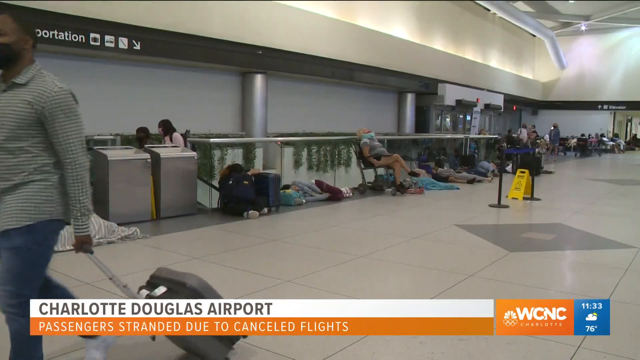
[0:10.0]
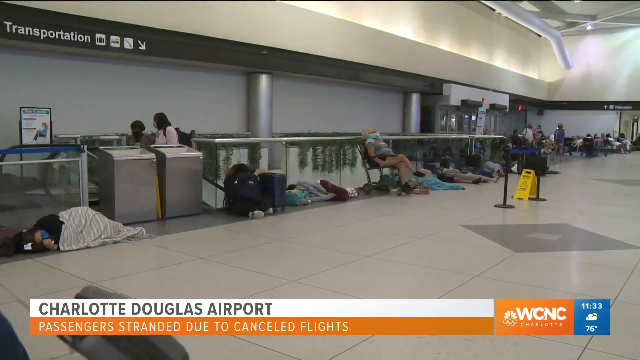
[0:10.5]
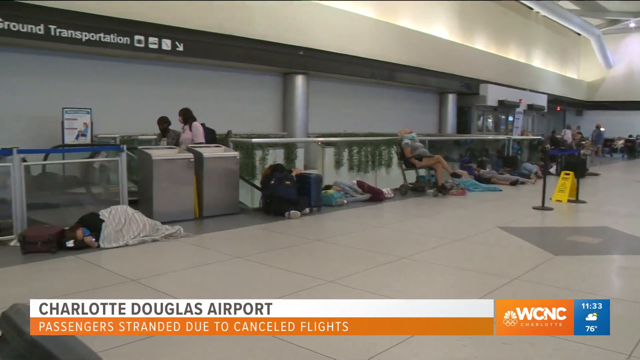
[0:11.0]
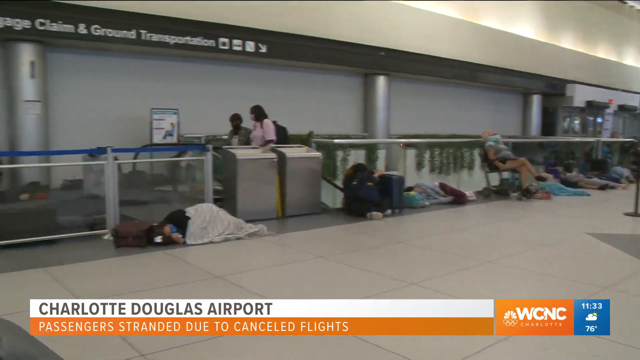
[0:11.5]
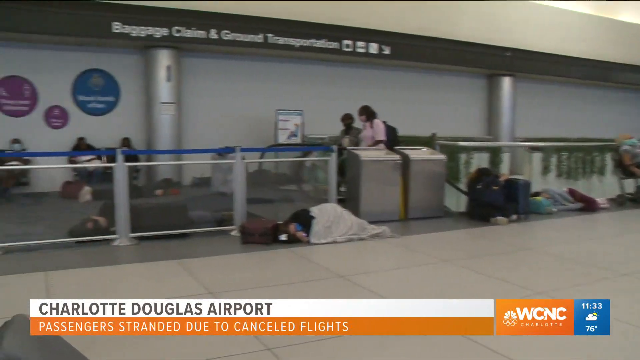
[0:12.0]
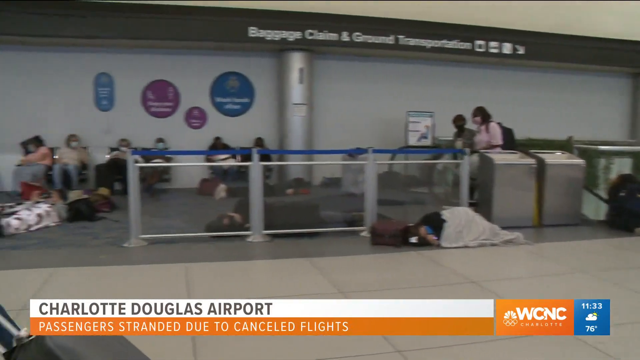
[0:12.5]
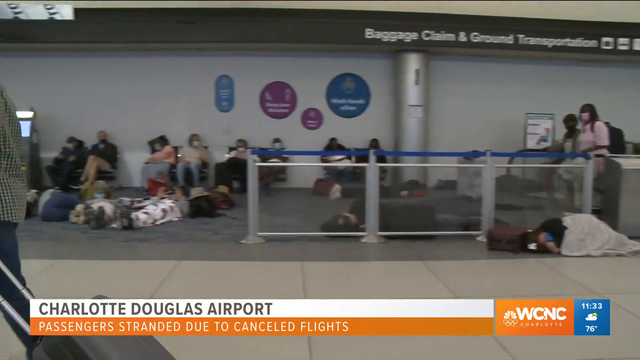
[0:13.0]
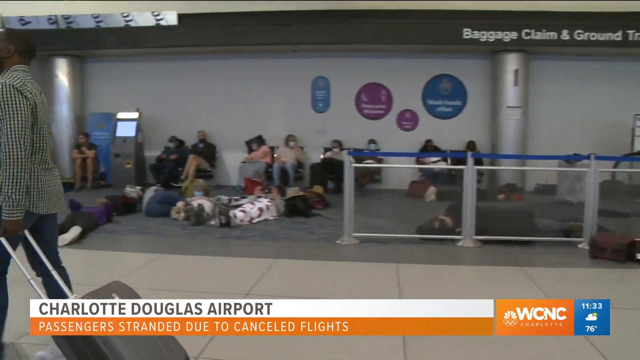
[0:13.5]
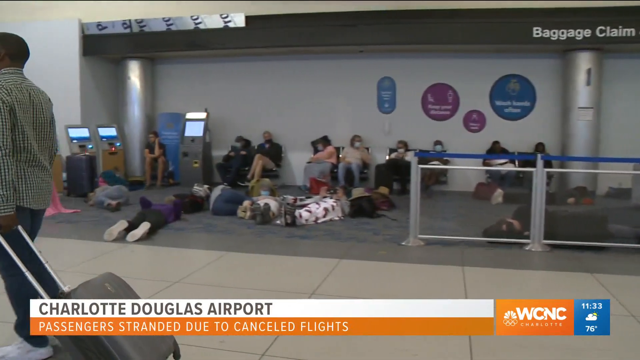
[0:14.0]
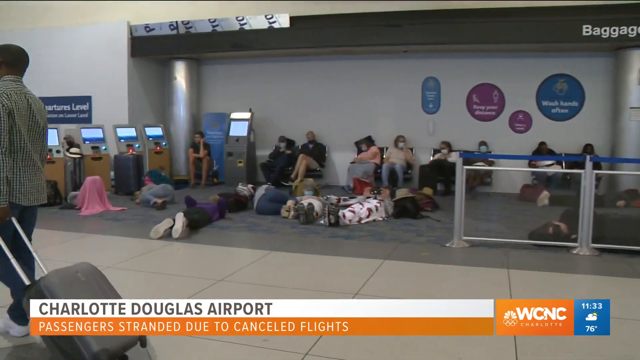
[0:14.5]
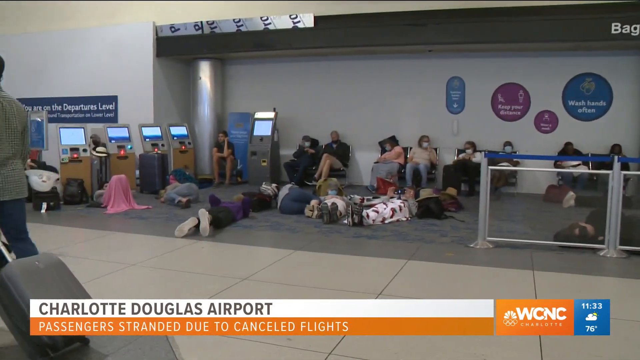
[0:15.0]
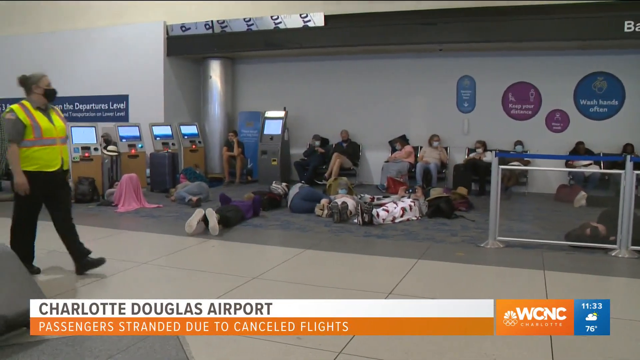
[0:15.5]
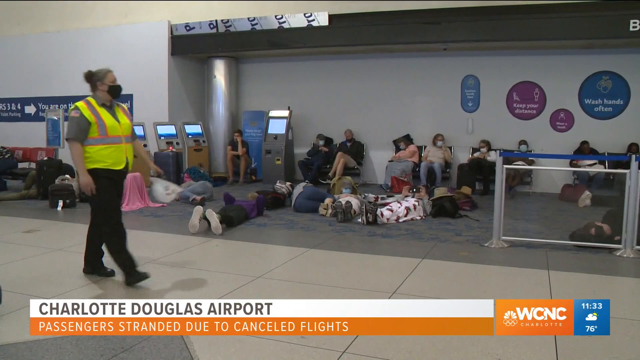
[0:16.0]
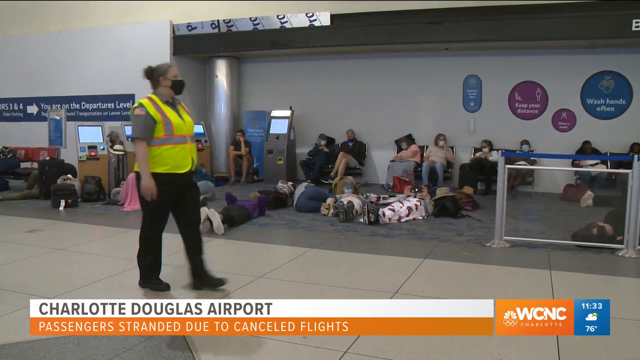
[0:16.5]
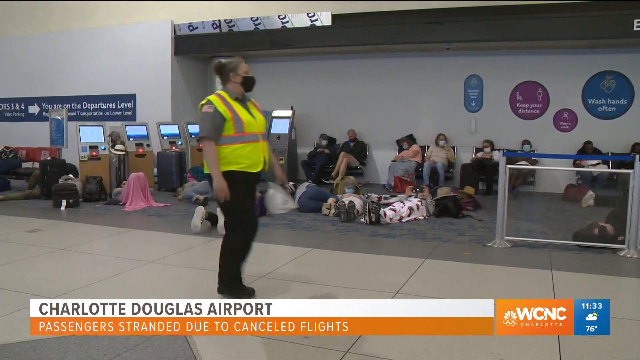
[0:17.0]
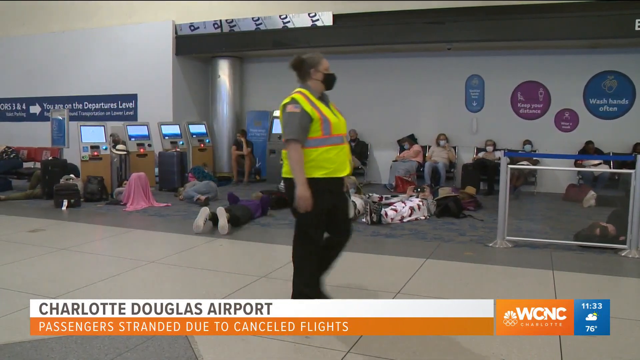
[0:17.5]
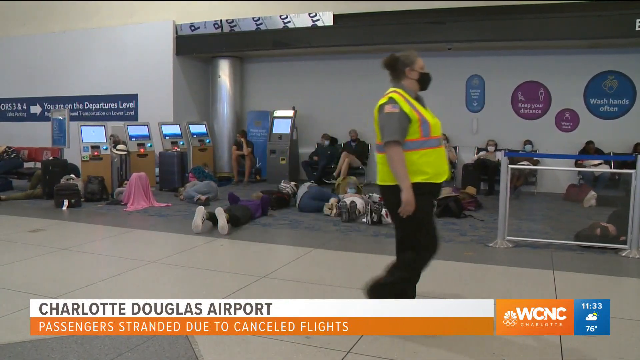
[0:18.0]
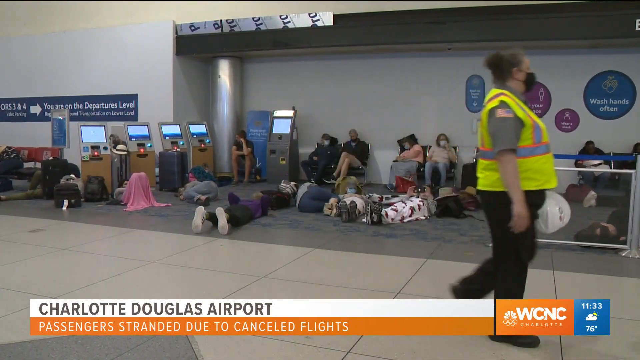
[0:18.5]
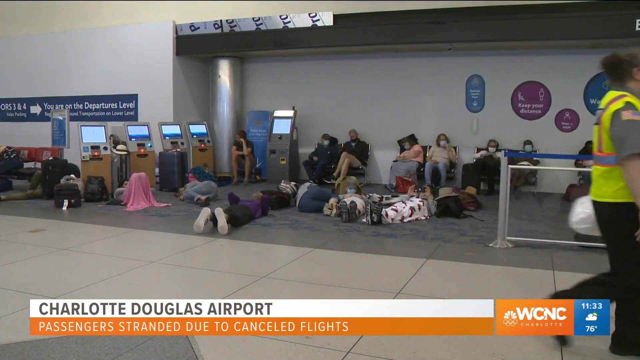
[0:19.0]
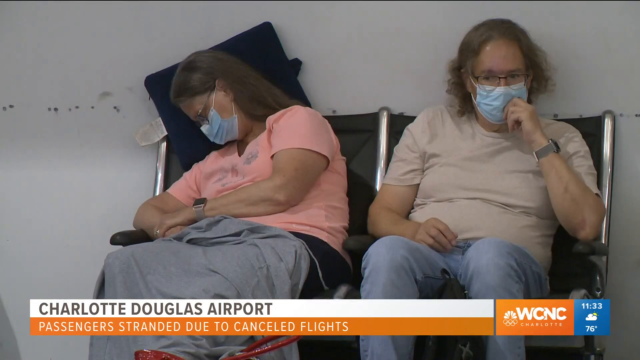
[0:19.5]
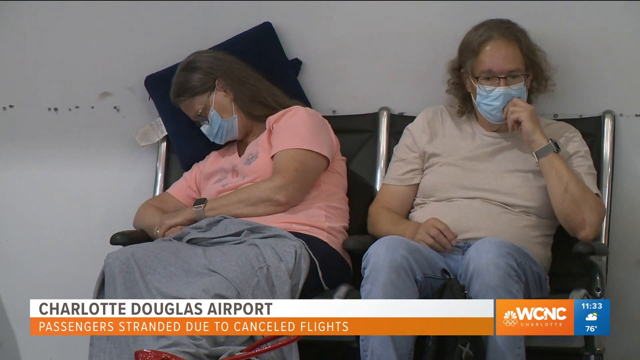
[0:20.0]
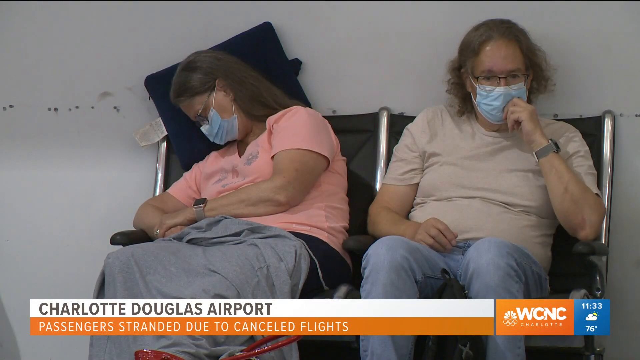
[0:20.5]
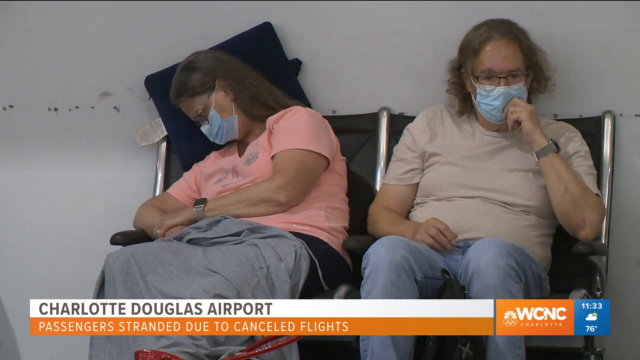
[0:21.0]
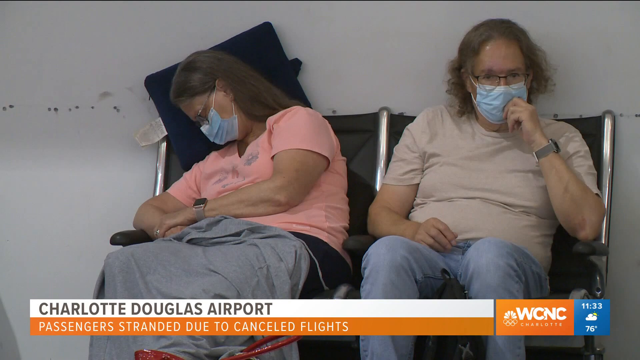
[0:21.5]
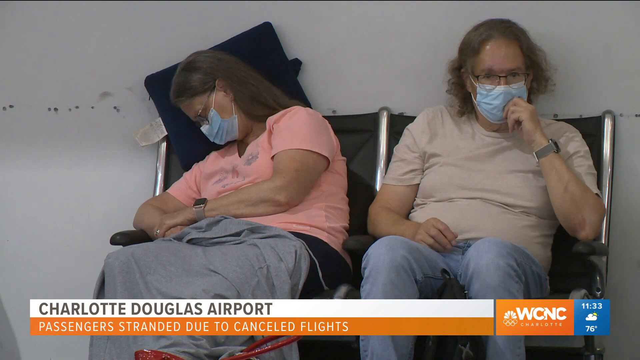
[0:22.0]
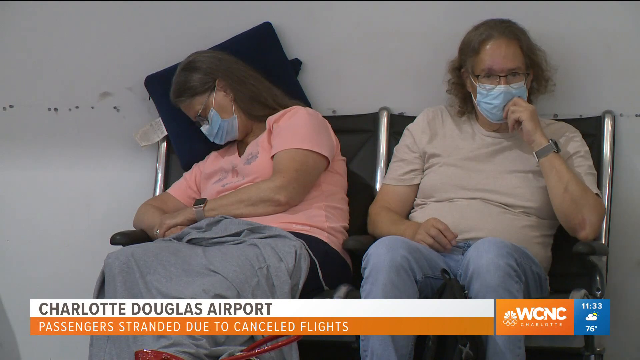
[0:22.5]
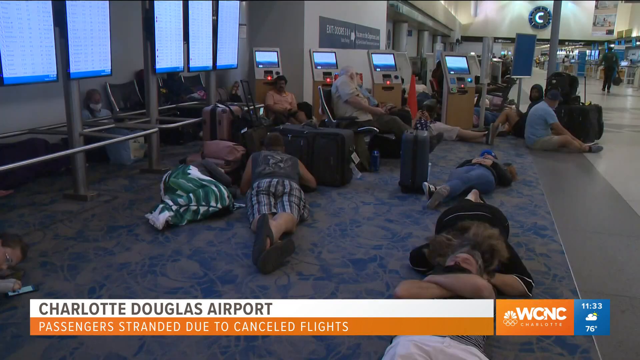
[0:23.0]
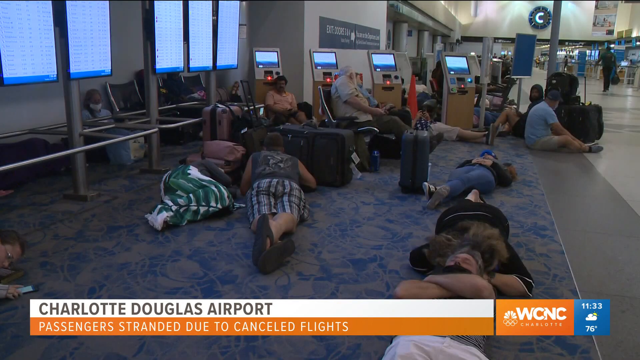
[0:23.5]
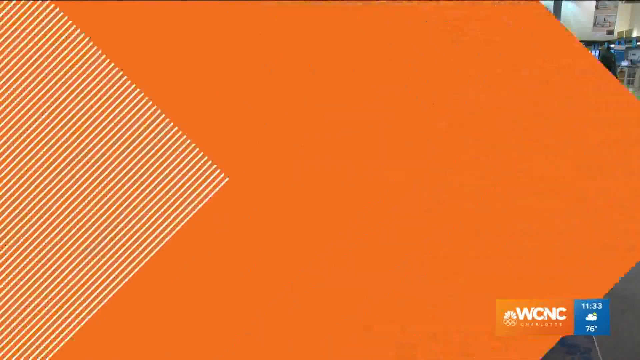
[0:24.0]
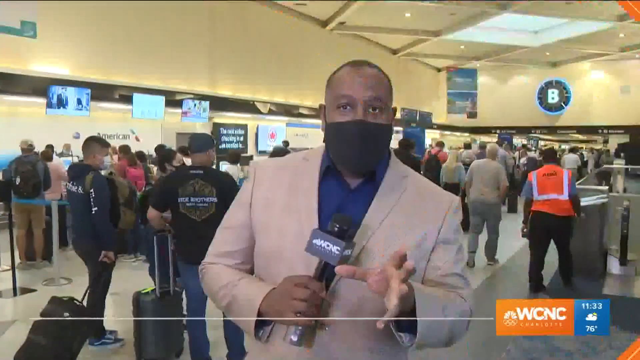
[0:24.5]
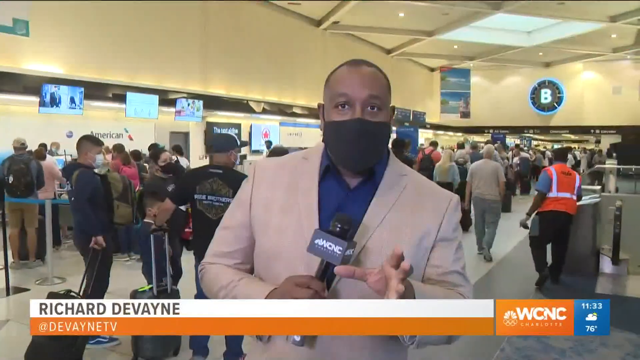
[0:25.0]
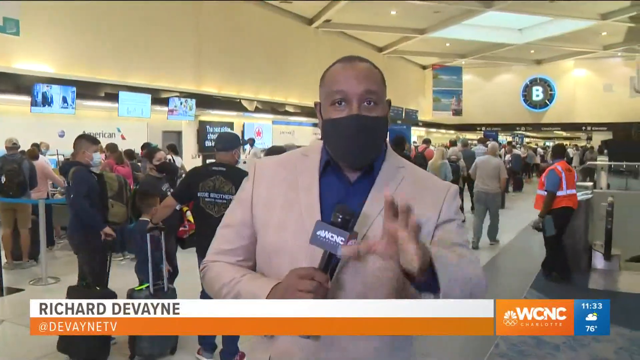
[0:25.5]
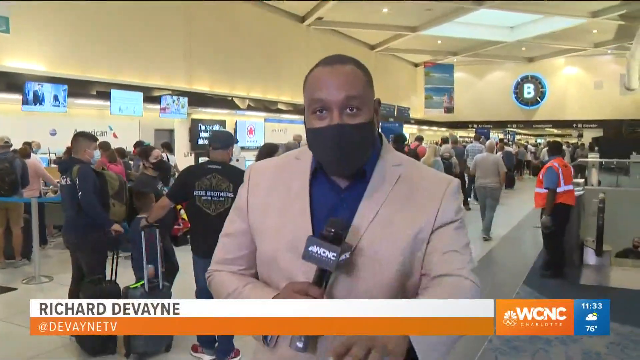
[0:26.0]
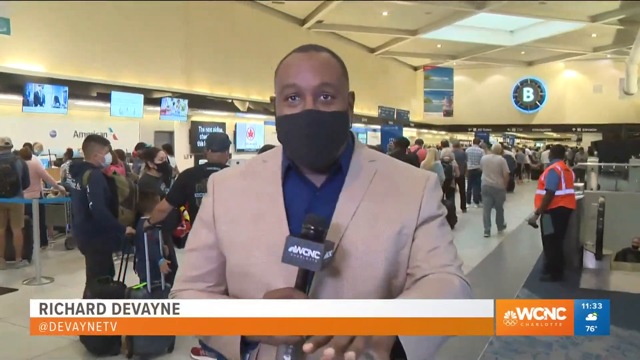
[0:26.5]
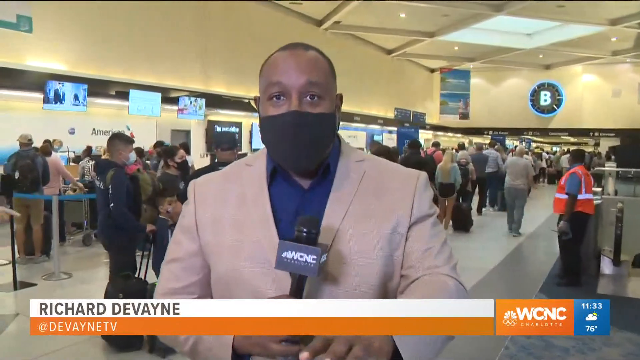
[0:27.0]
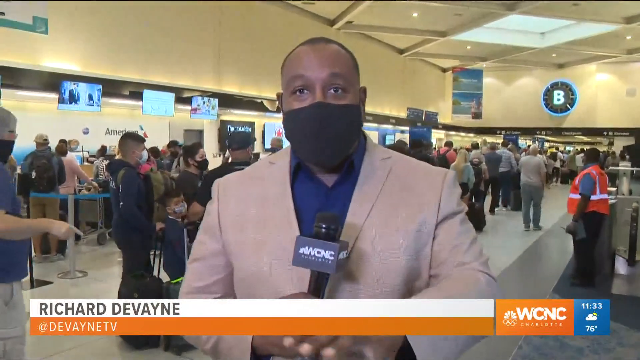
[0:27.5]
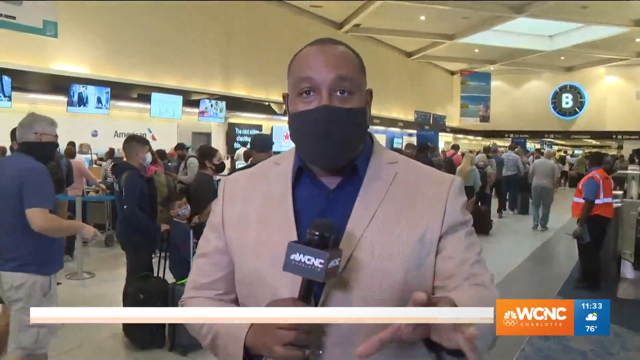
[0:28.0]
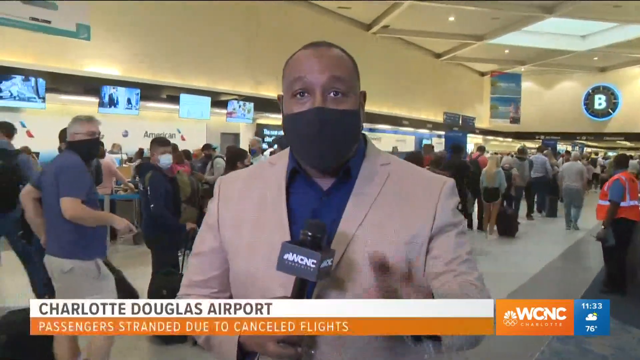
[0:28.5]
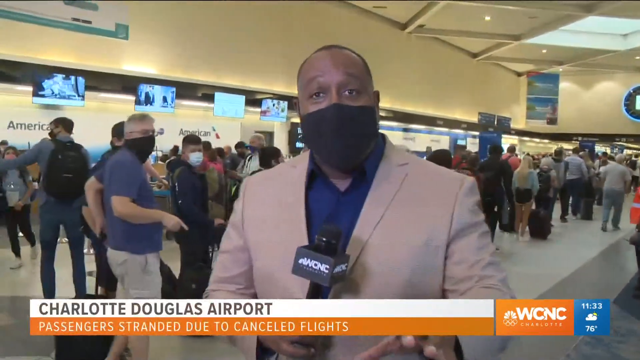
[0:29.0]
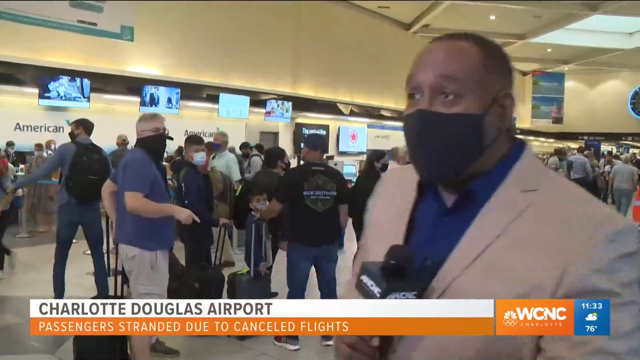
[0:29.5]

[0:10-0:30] Many people are sleeping on the floor, and many others are sitting on chairs. The place seems to be an airport or a bus terminal, or something like that.